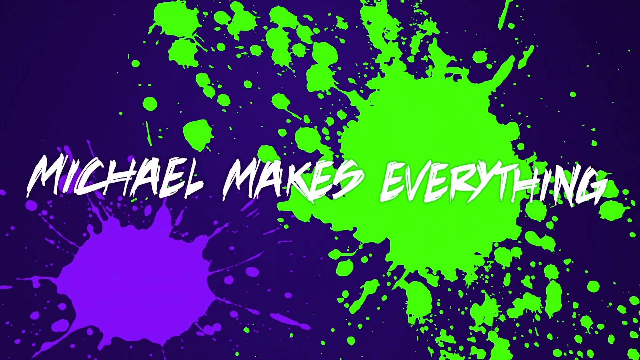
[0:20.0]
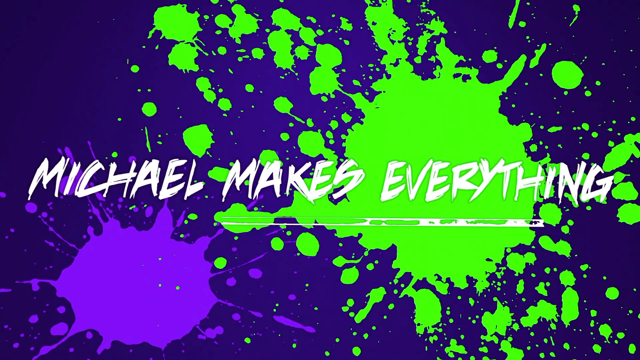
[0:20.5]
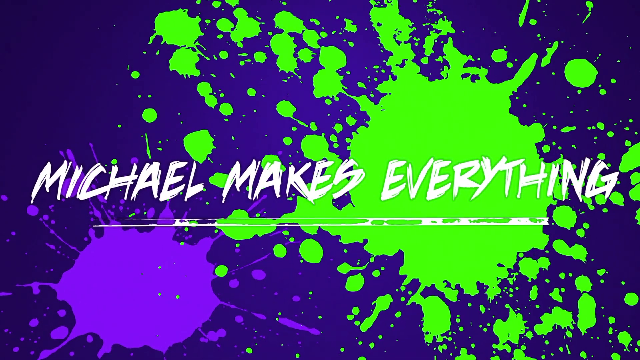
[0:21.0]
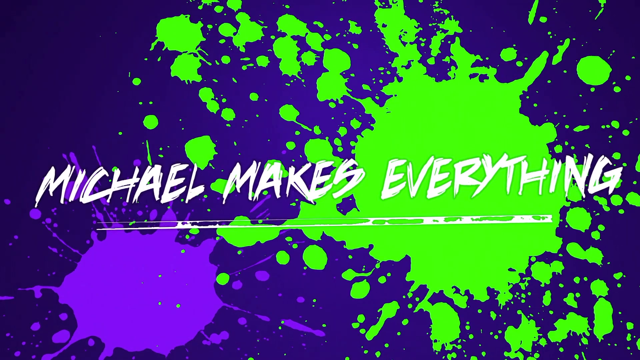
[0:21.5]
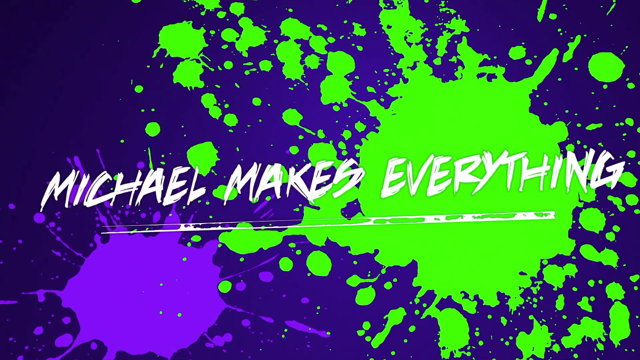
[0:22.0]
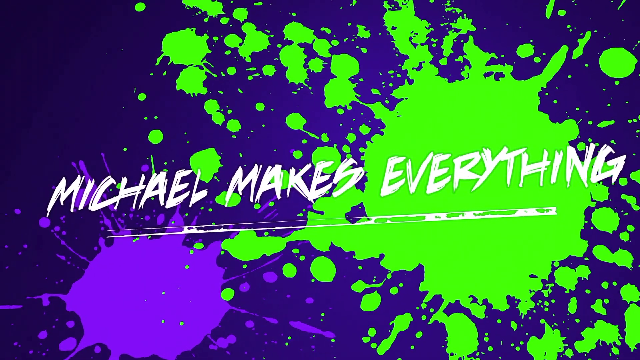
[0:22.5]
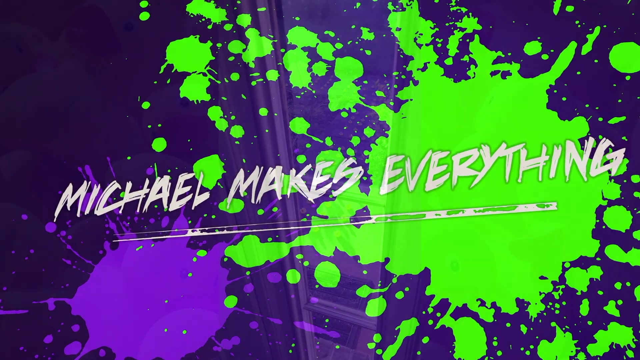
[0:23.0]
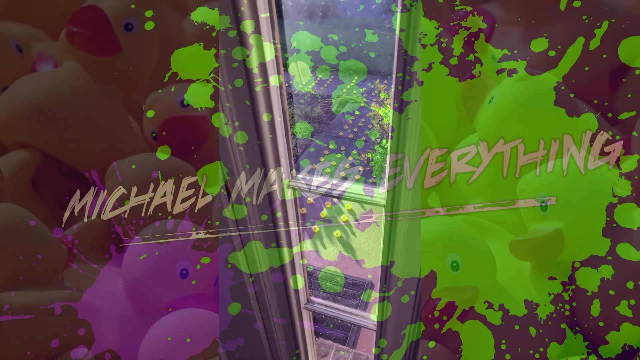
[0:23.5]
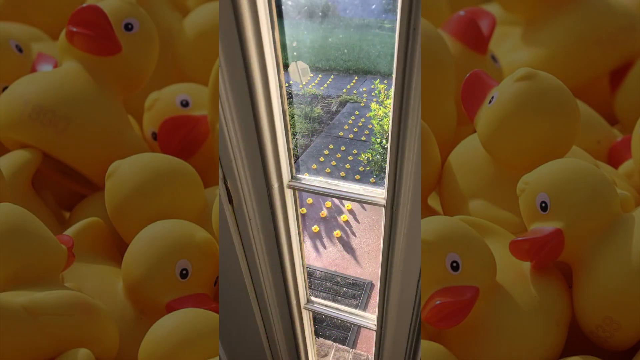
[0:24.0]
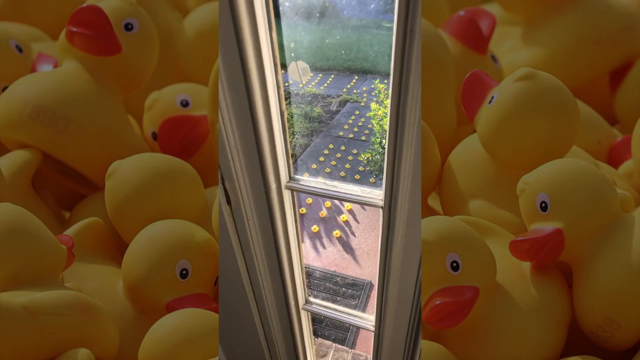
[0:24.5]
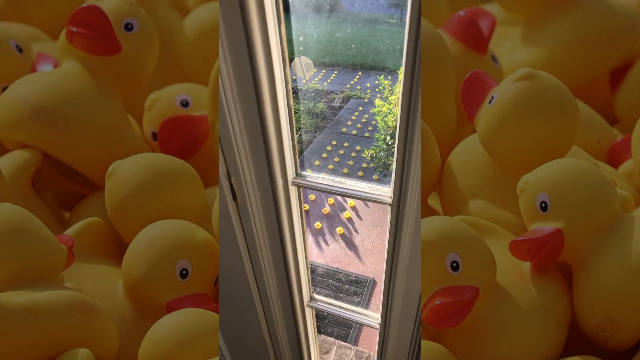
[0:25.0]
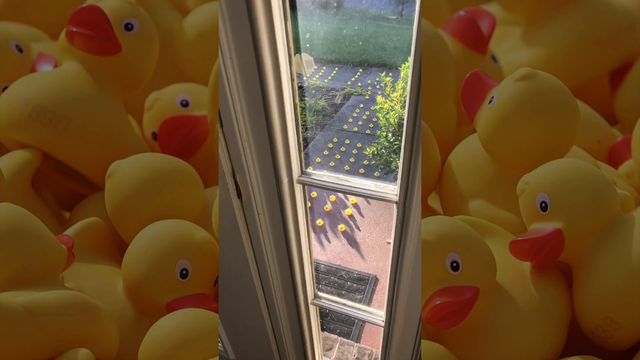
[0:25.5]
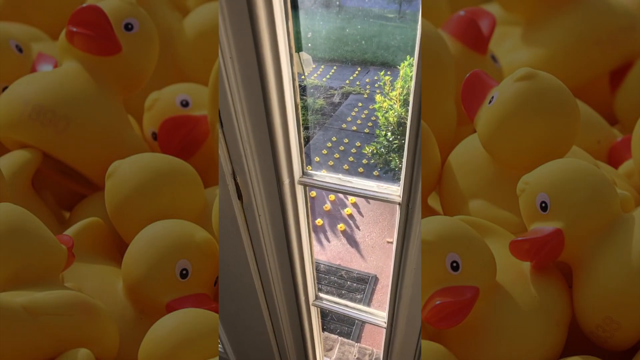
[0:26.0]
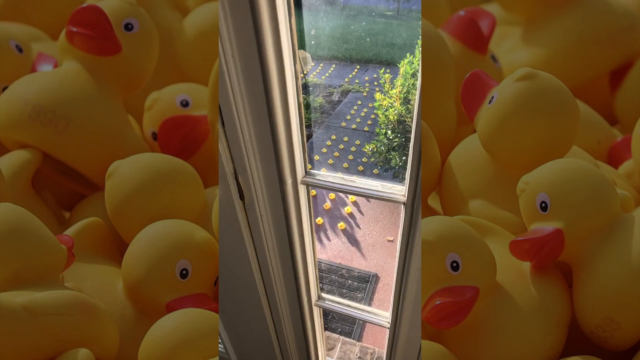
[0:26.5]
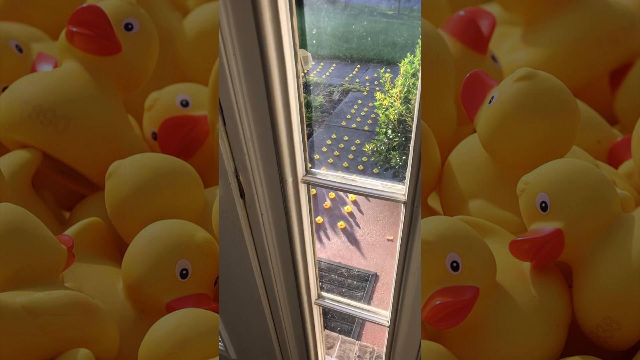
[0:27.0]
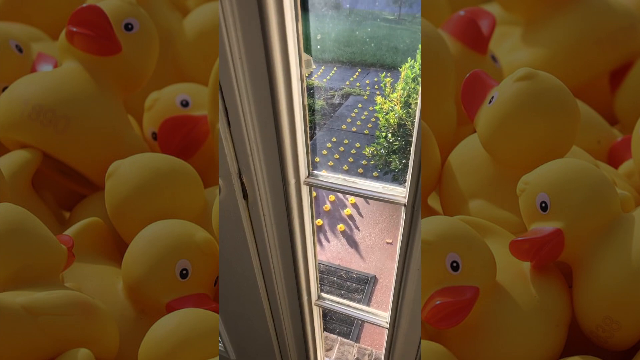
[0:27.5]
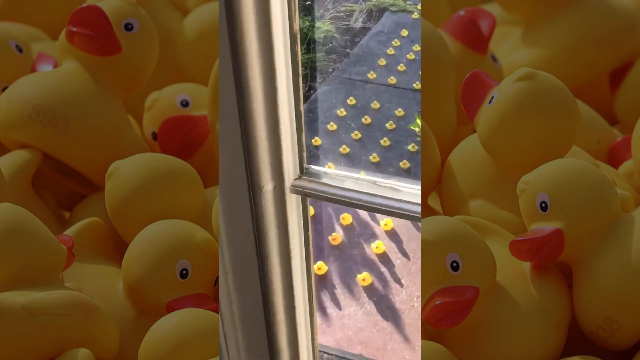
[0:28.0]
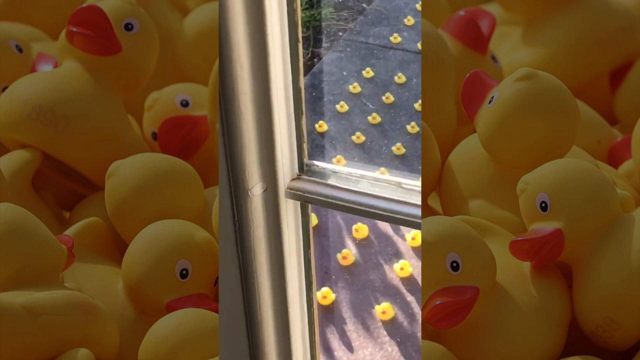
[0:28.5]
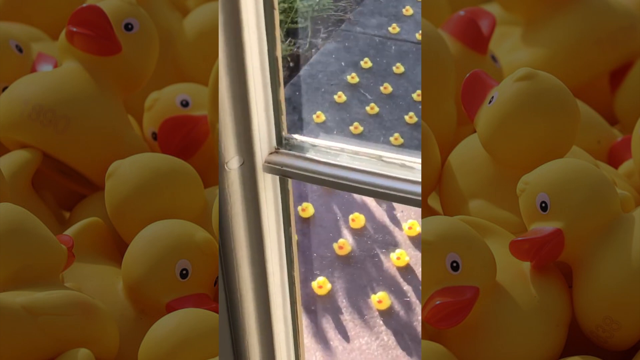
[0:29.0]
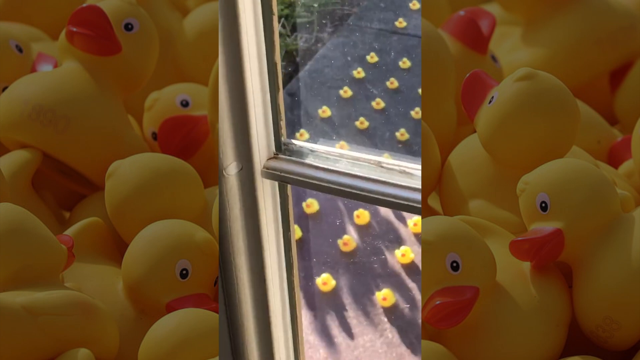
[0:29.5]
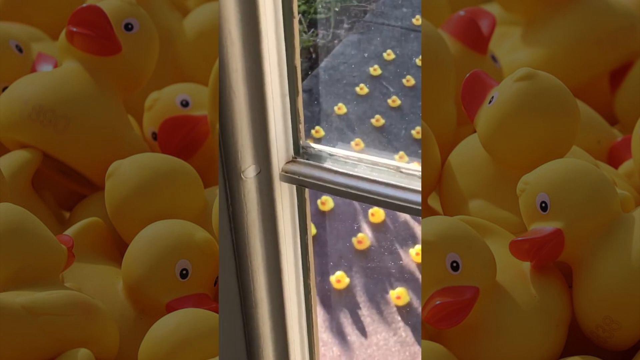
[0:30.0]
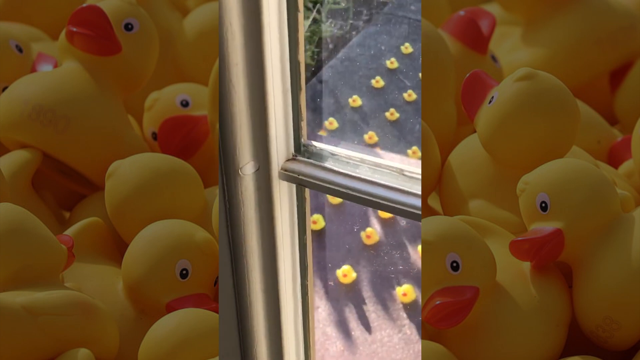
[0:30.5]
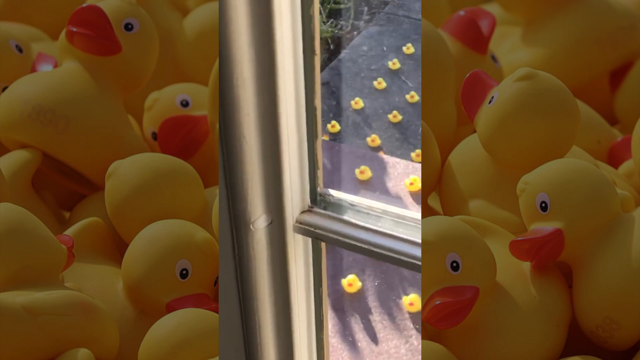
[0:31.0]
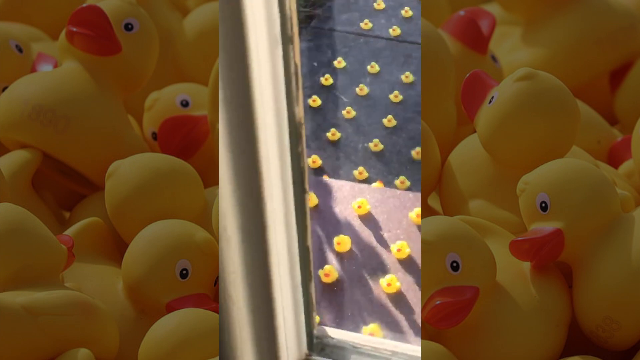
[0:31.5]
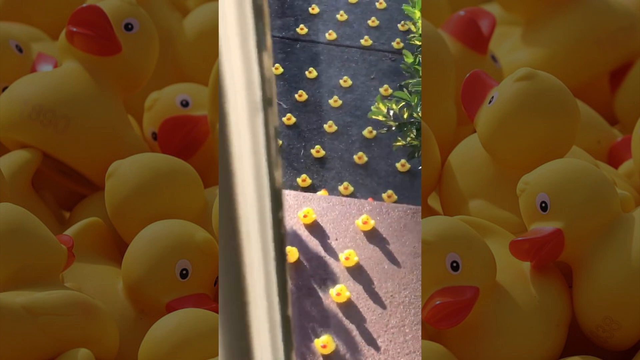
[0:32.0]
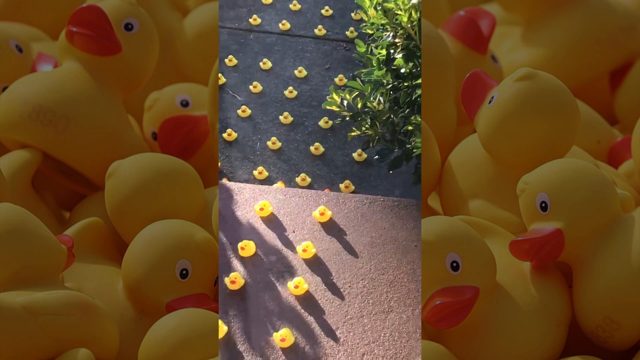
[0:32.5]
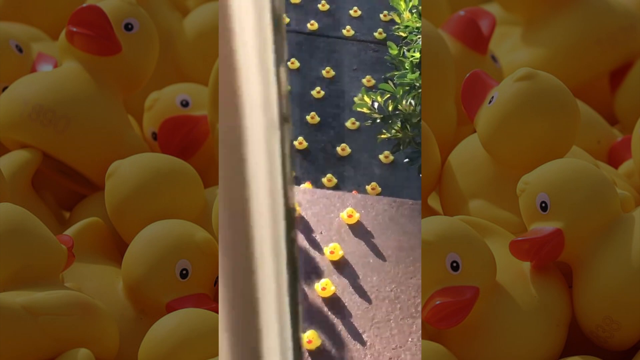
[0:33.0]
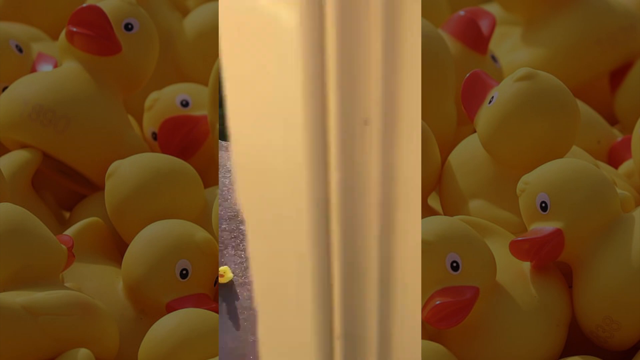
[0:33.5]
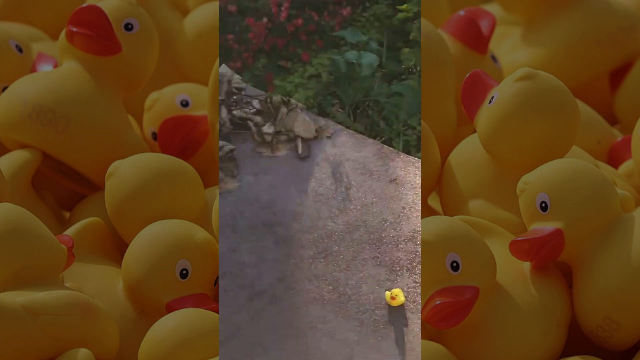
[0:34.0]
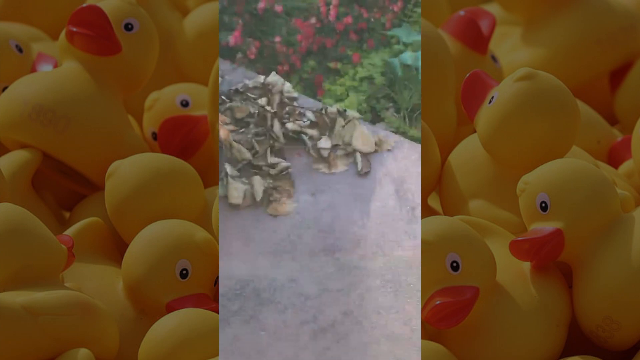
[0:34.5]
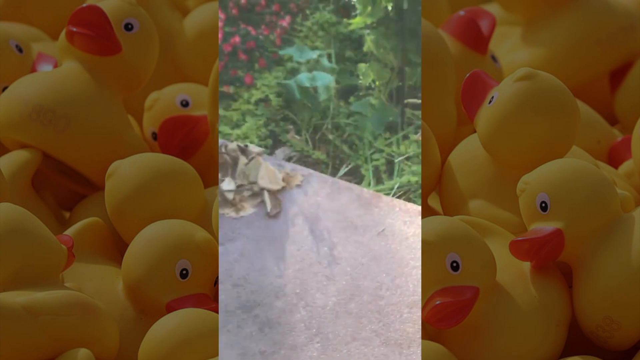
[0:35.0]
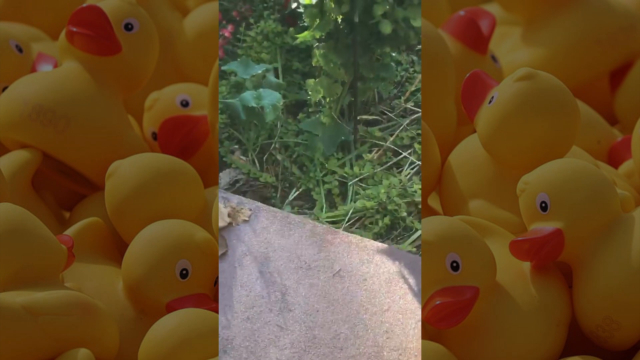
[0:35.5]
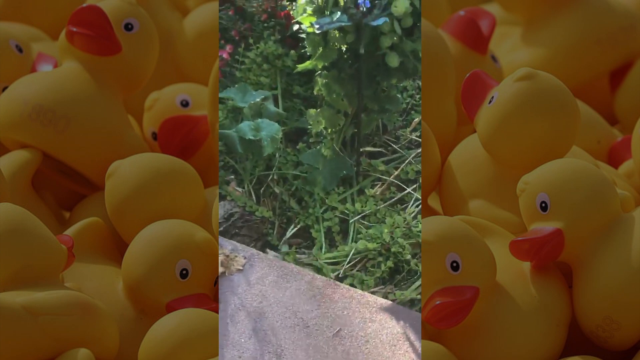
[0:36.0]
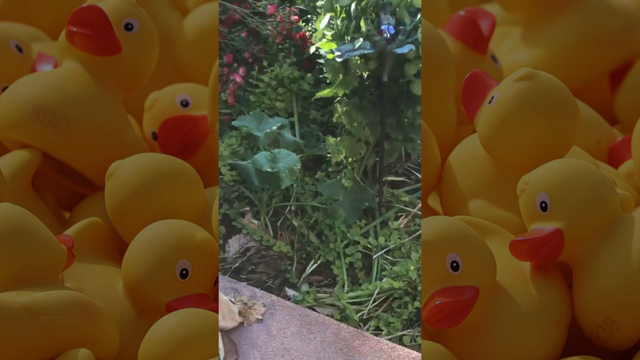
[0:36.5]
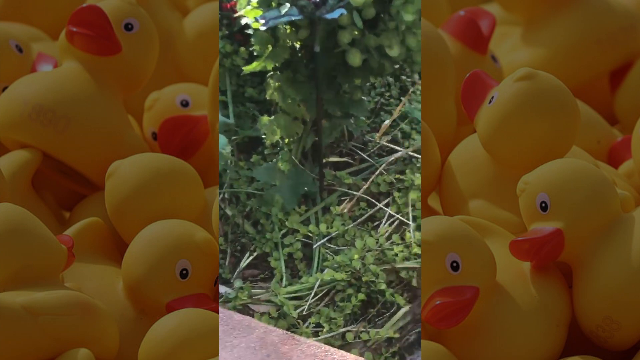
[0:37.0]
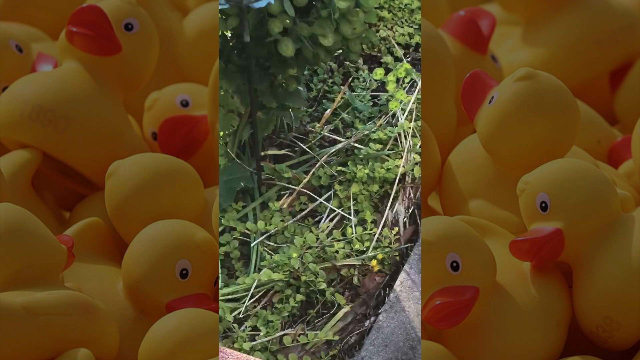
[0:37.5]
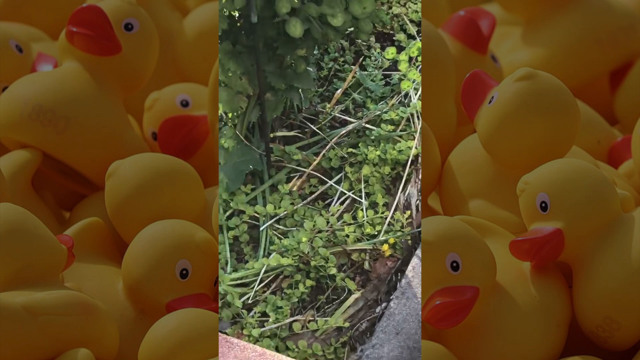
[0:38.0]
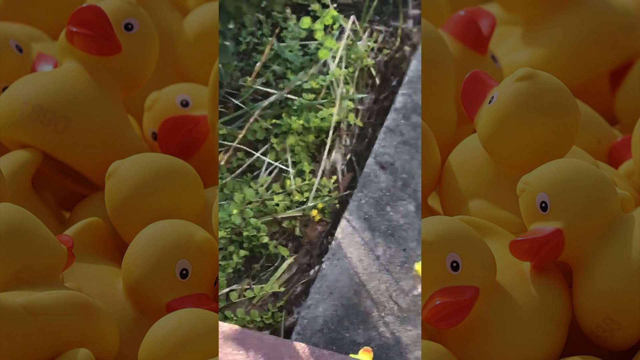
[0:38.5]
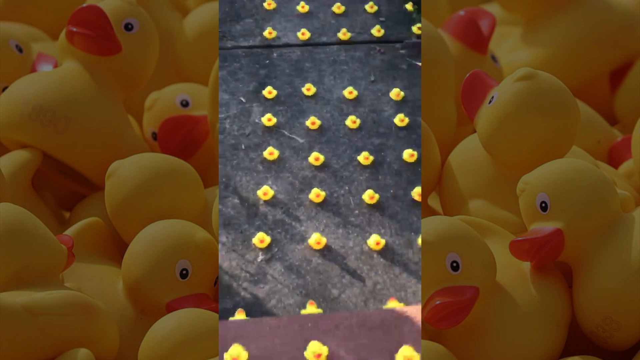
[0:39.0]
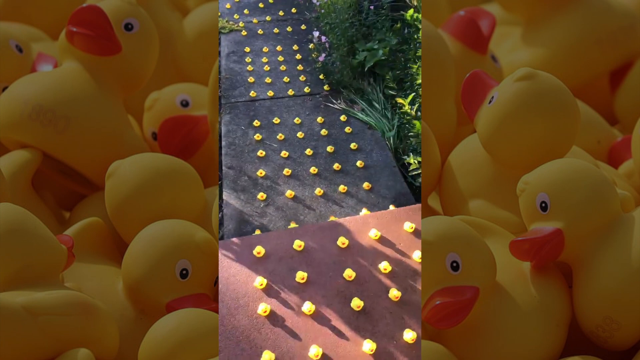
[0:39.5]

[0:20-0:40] The words "Michael makes everything" appear in white on a blue background with green and purple colors splattered all over it, apparently a video channel of Michael, probably a YouTube channel. As the words begin to rotate, the camera zooms in to a window view. Outside the window is a lineup of rubber duckies in a walkway, appearing to be an army of rubber duckies, apparently lined up in groups of five. They extend past the house walkway onto the regular walkway, which has green grass behind it. The camera zooms in on the rubber duckies right in front of the window below; it appears to be moving outside, moving to the grass area. It then zooms in on all the rubber duckies lined up, apparently right in front of the door.